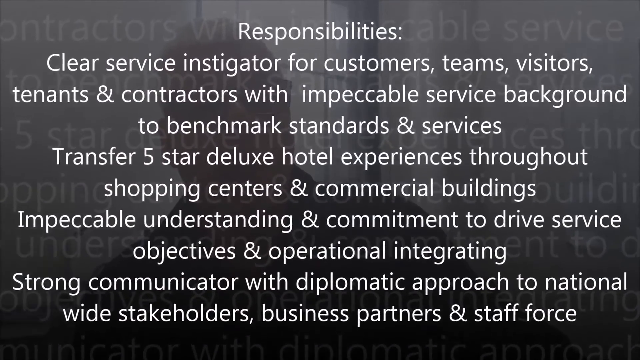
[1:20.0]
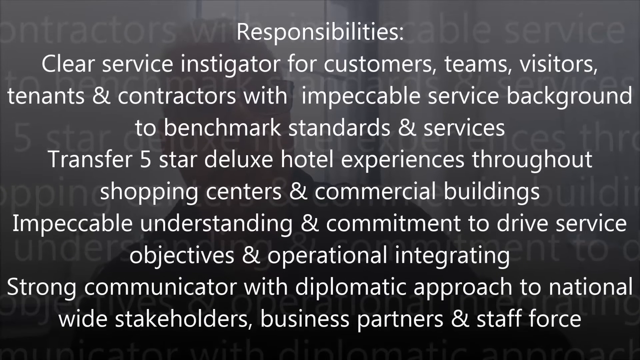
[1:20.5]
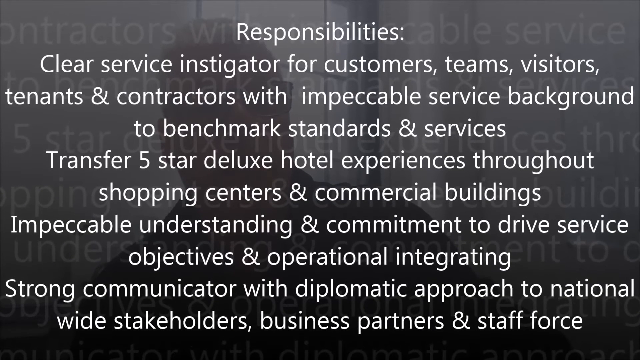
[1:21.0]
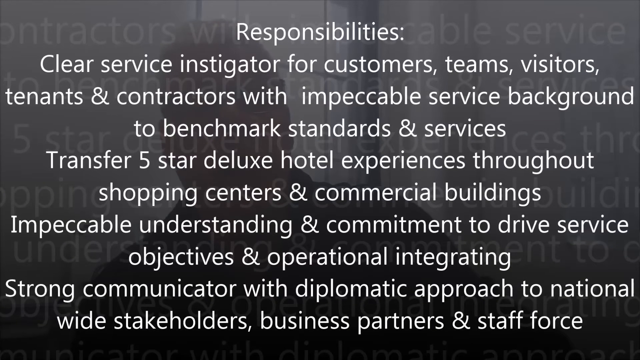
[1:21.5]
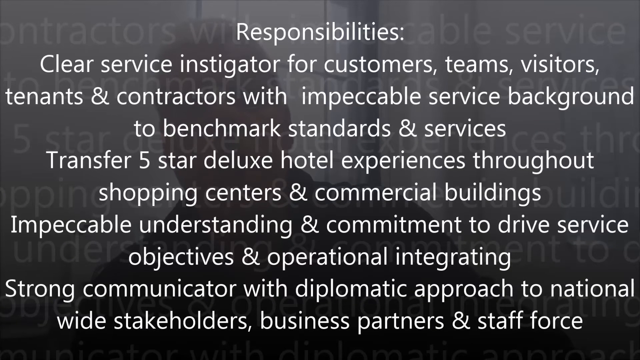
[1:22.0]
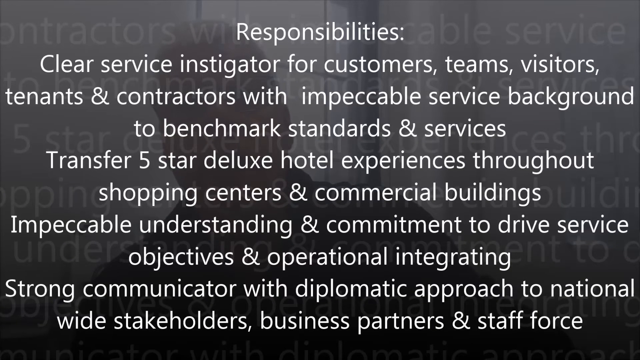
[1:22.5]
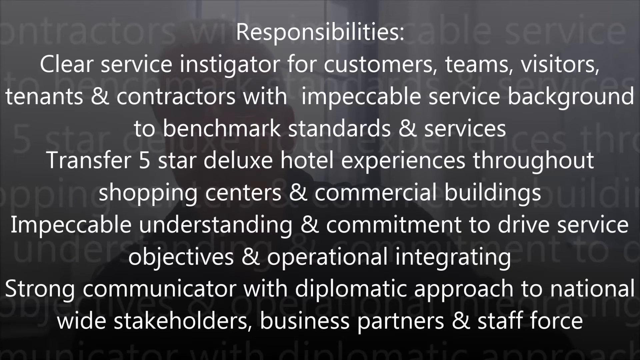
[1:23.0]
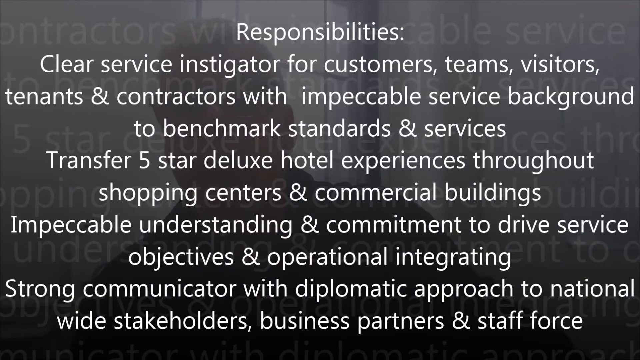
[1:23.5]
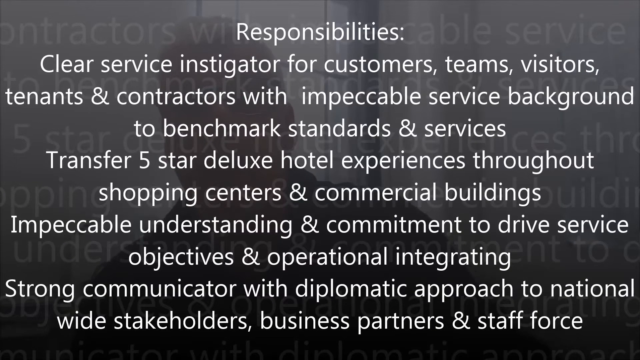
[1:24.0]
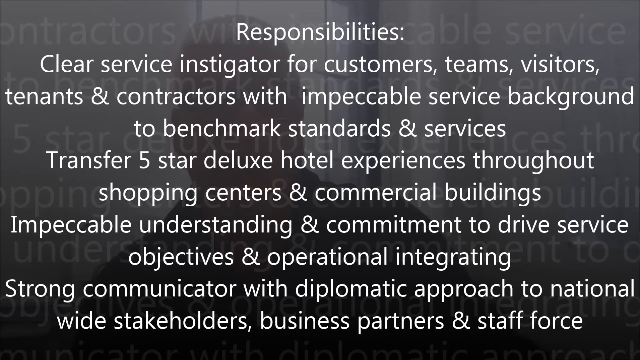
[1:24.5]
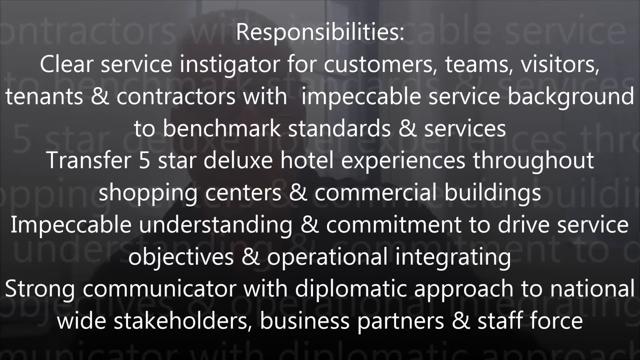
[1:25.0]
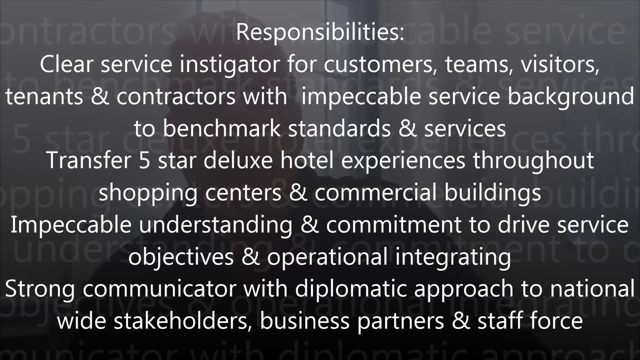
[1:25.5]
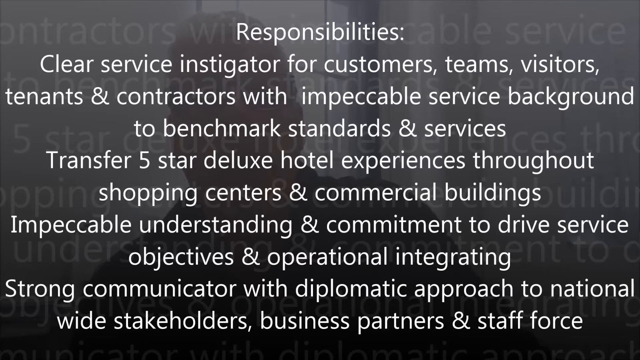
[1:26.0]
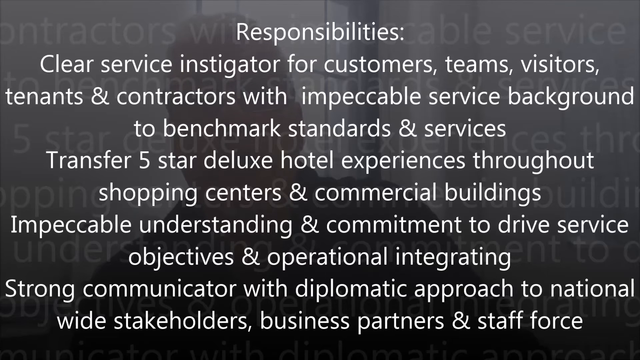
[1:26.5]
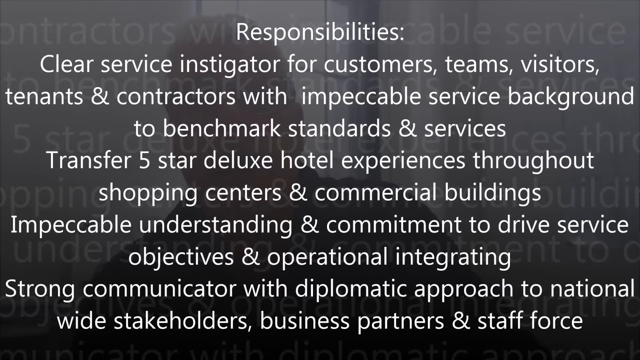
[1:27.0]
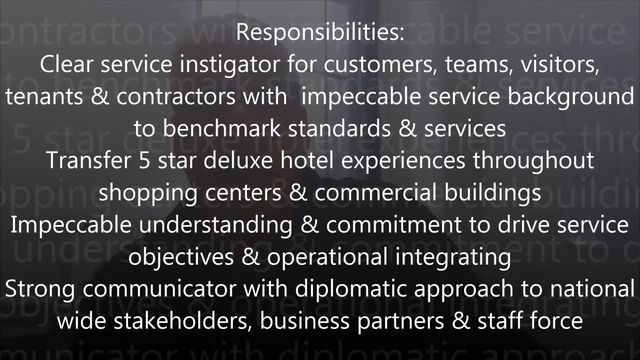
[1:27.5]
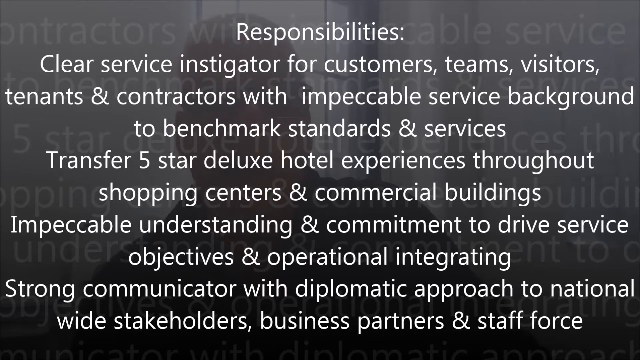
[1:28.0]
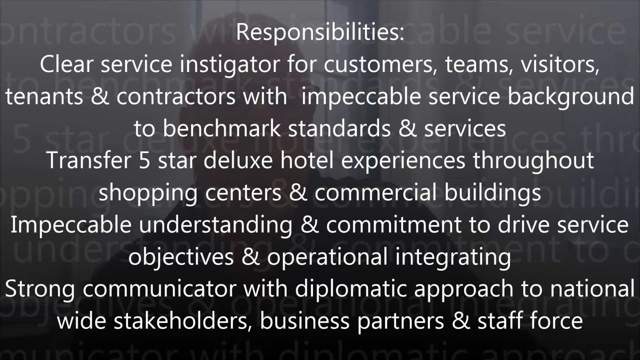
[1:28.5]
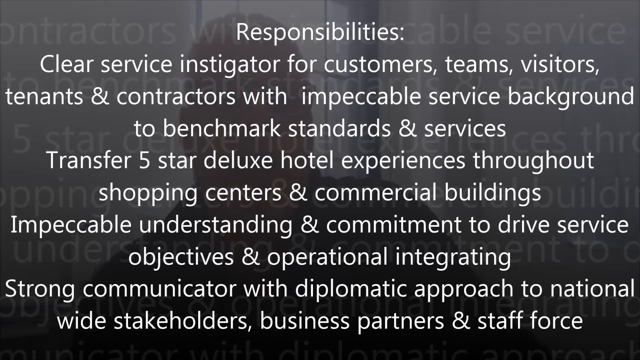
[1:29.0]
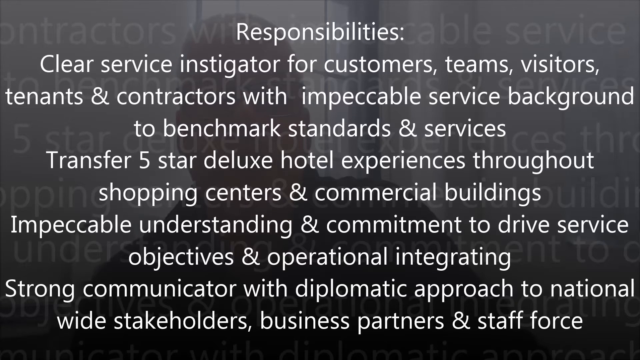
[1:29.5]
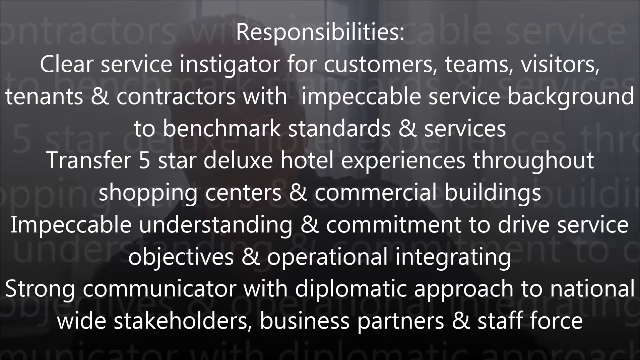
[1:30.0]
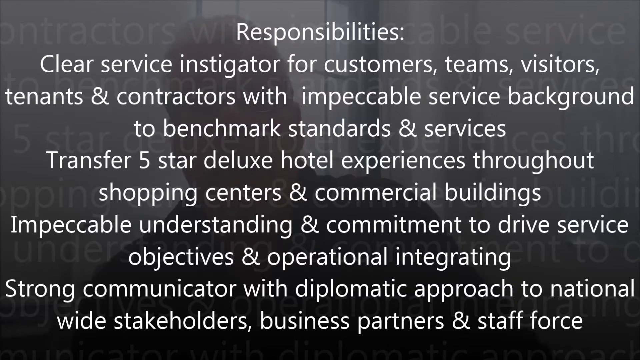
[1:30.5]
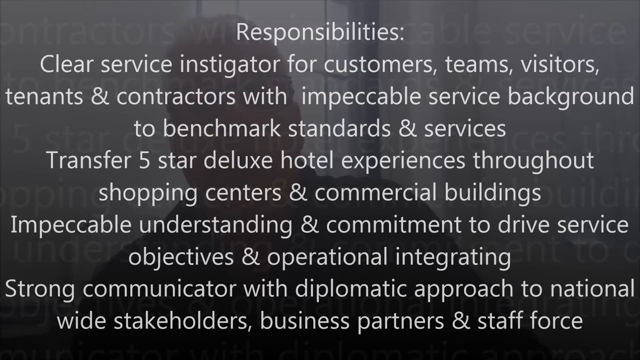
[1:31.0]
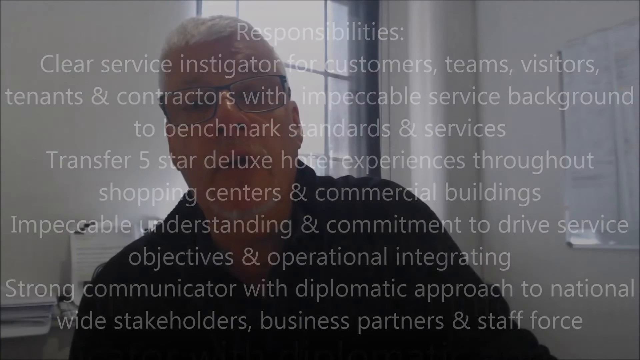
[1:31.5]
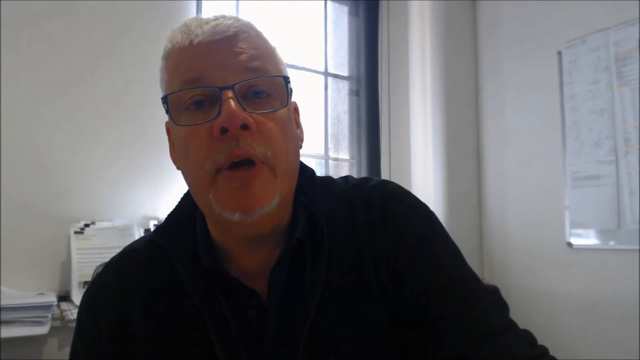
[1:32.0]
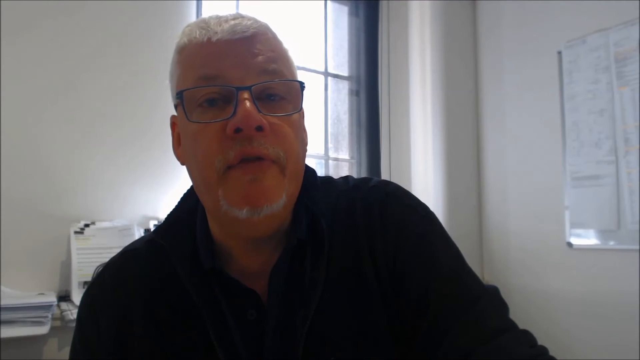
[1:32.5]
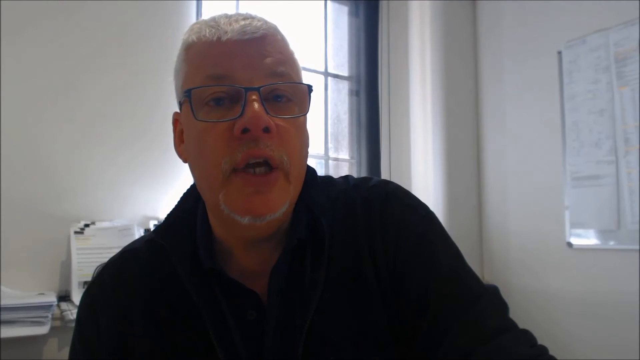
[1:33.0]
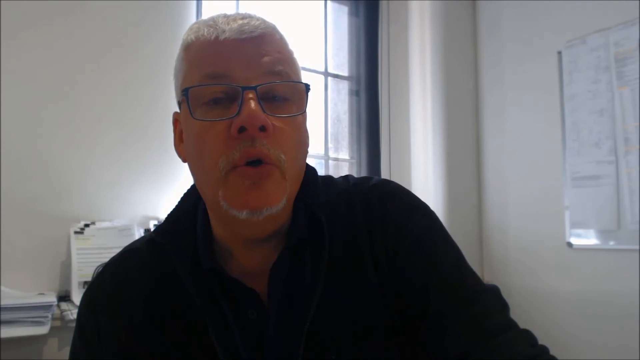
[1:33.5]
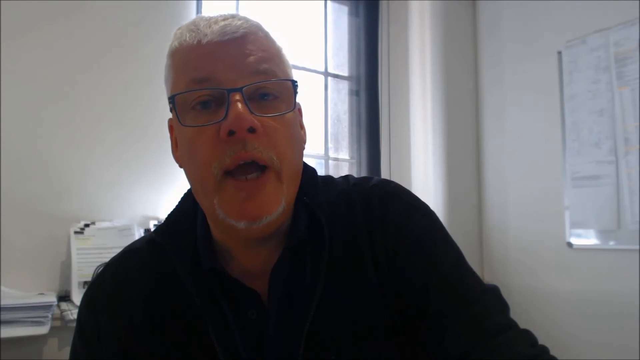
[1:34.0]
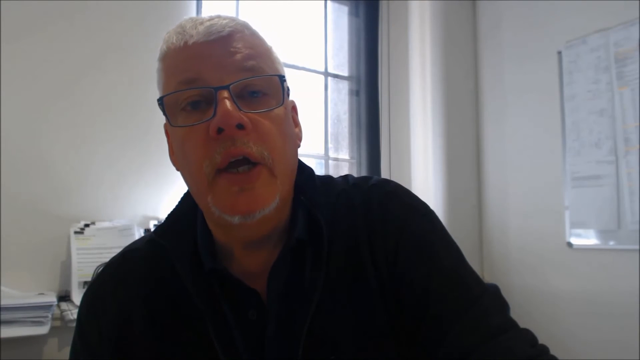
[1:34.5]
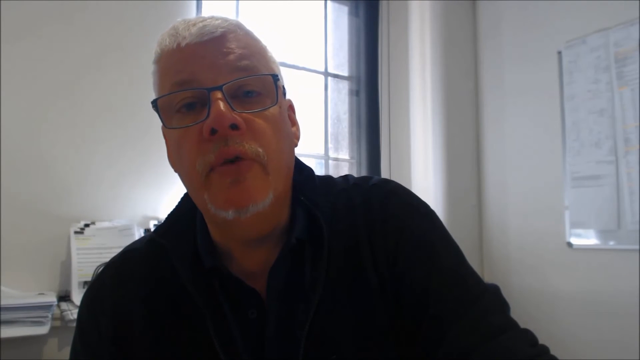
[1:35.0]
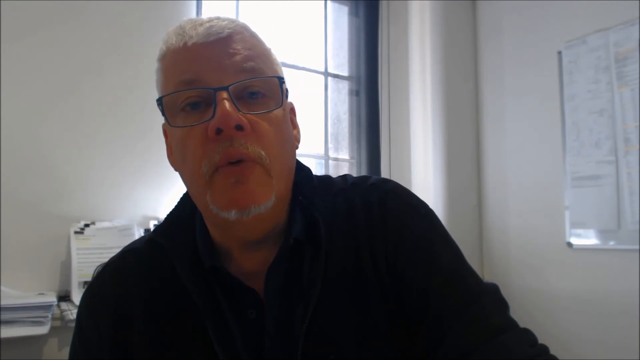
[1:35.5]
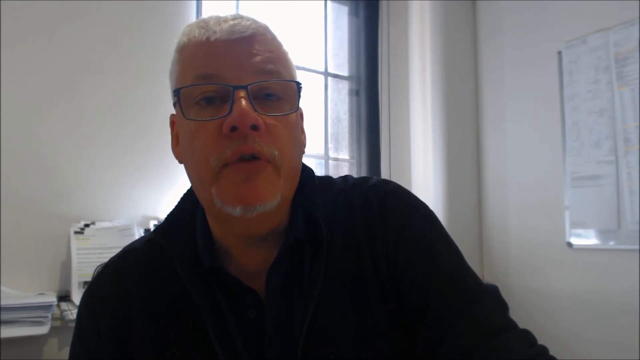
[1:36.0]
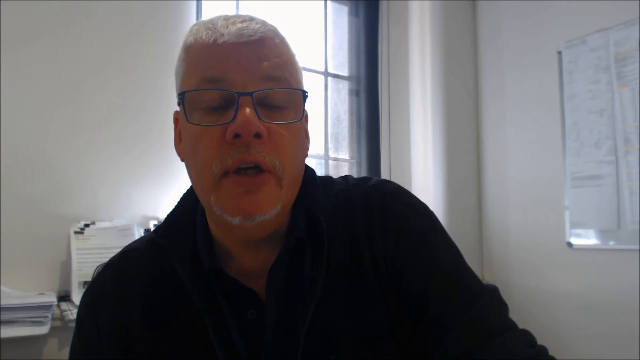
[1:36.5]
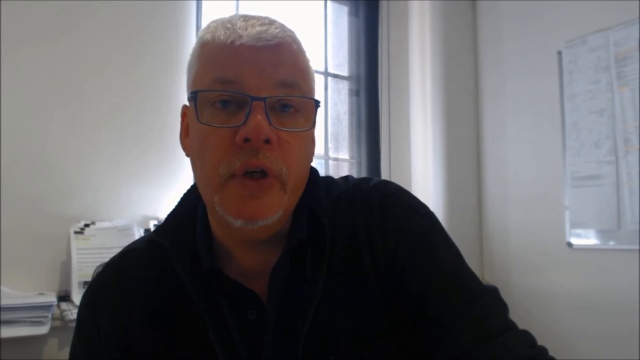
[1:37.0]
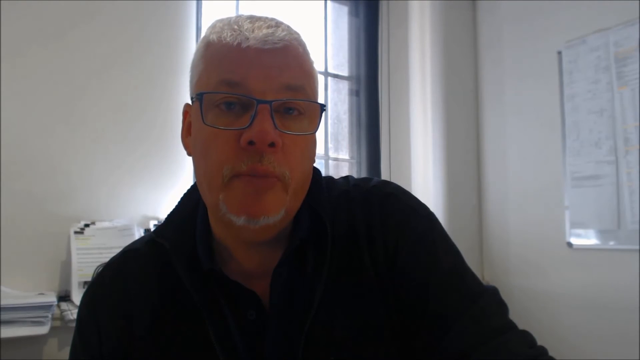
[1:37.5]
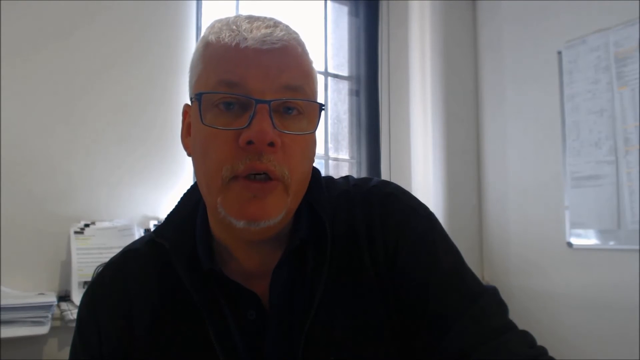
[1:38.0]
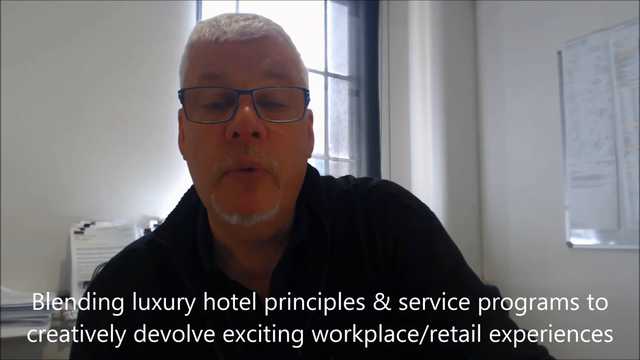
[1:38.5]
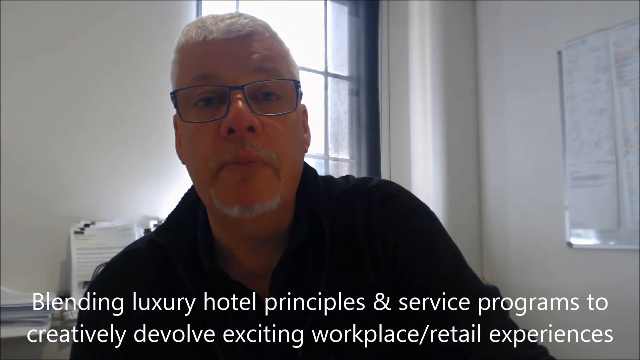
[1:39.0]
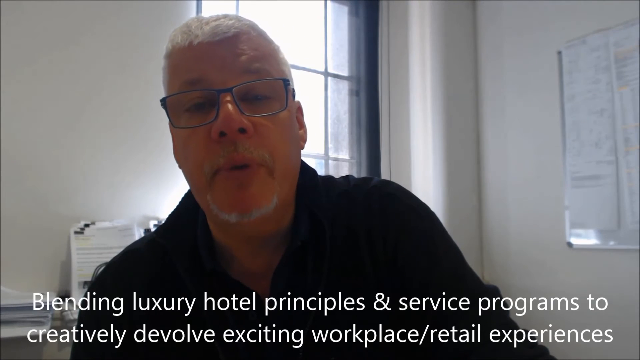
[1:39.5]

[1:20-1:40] A second screen of responsibilities appears, also titled responsibilities, outlining more duties related to hotels. One point reads "transfer five-star deluxe hotel experiences throughout shopping centers and commercial buildings." The man is faded in the background, and the text is faded and zoomed in behind as well. The screen holds a lot of text. At the end, the text goes away and the focus returns to the man speaking.